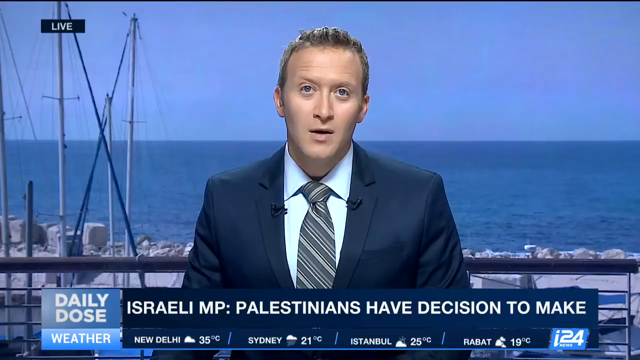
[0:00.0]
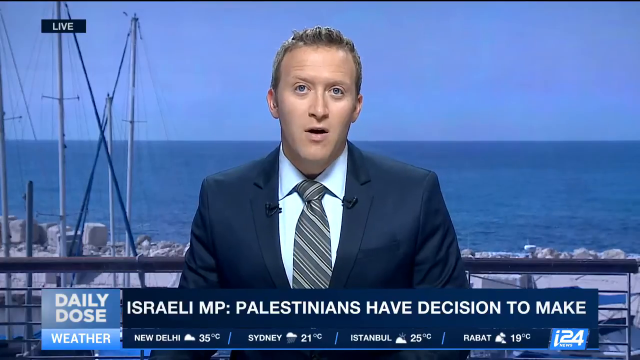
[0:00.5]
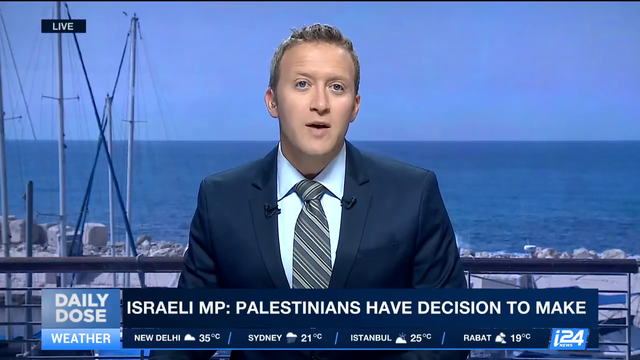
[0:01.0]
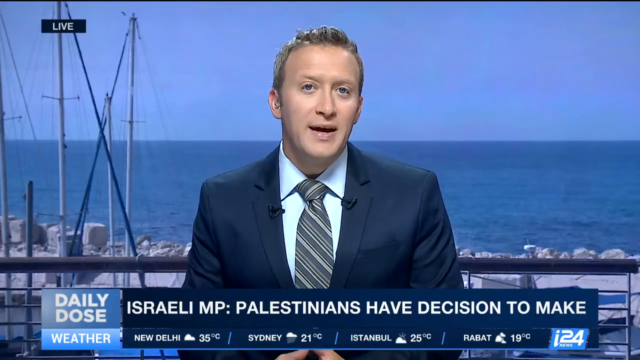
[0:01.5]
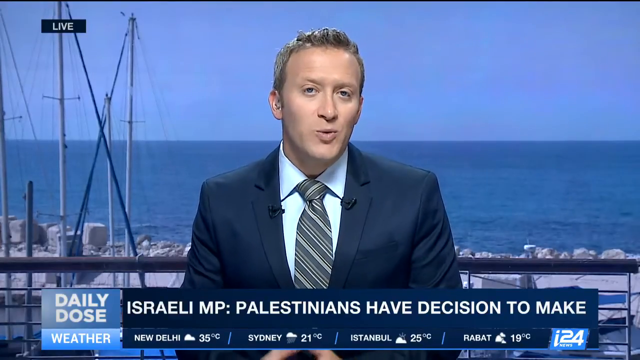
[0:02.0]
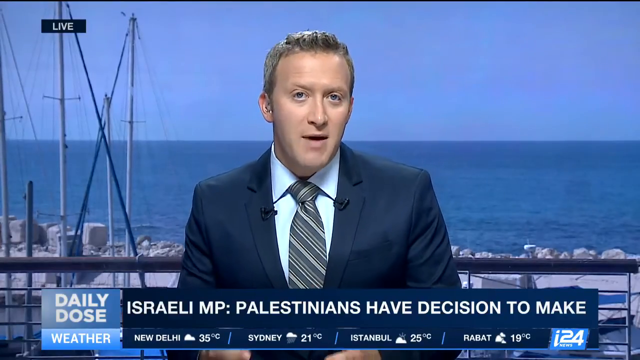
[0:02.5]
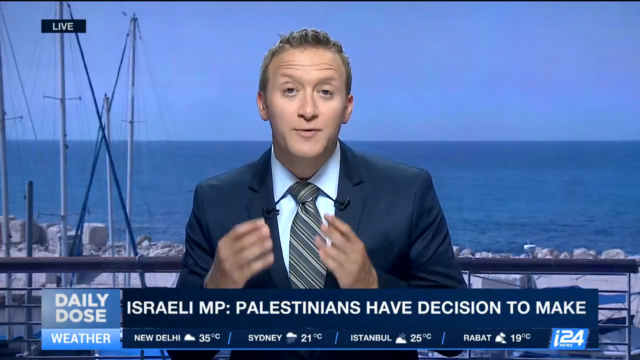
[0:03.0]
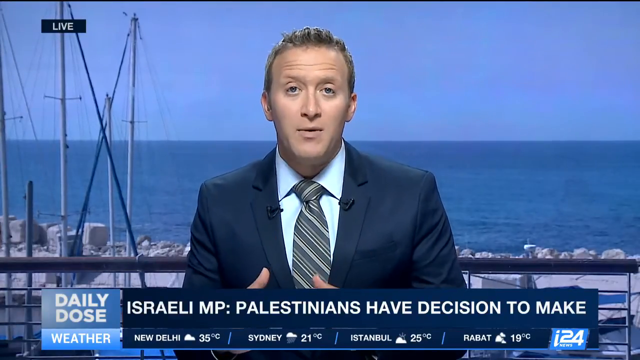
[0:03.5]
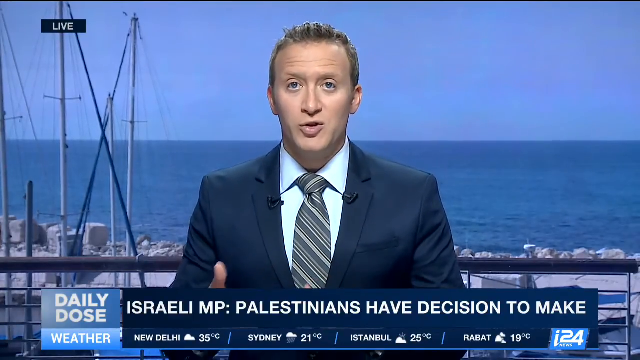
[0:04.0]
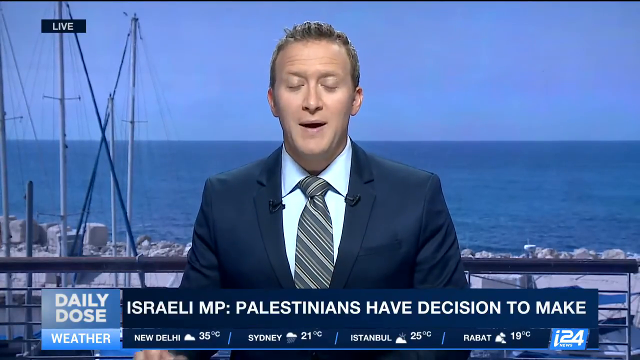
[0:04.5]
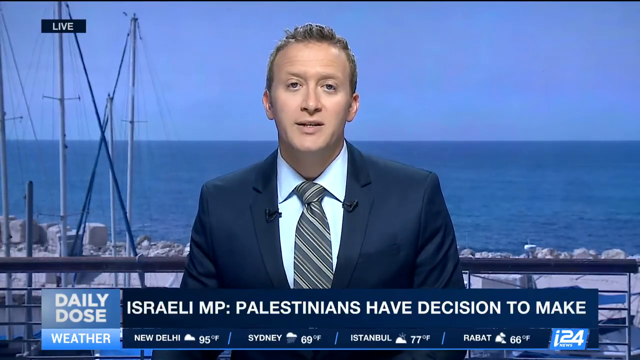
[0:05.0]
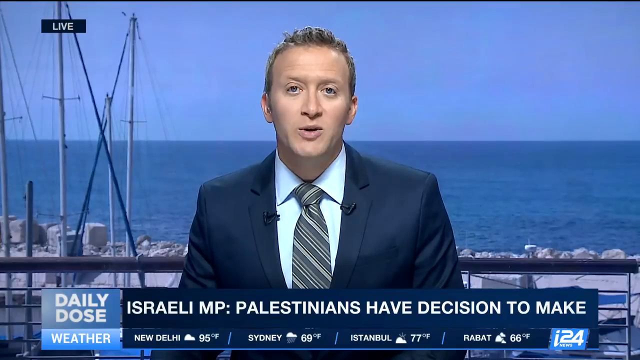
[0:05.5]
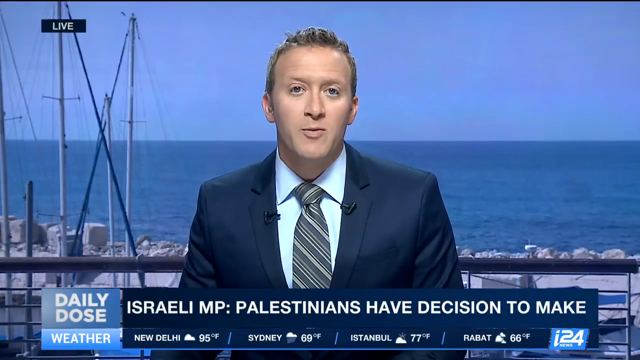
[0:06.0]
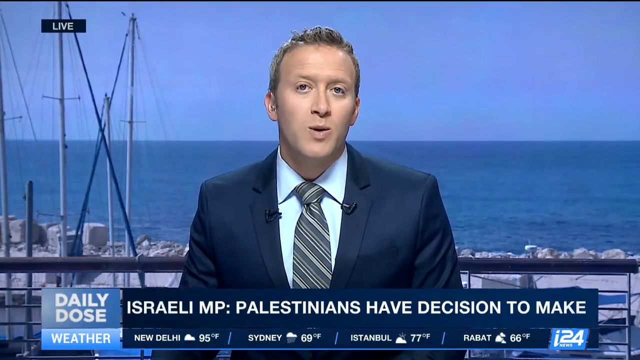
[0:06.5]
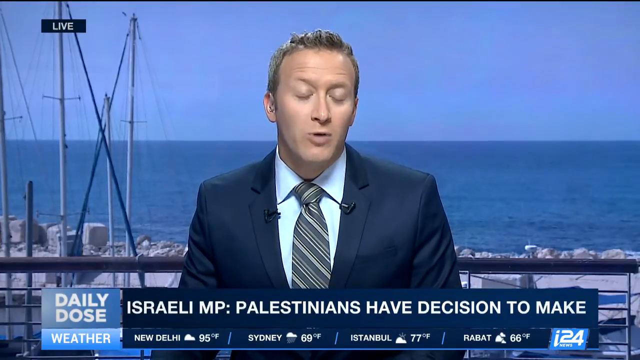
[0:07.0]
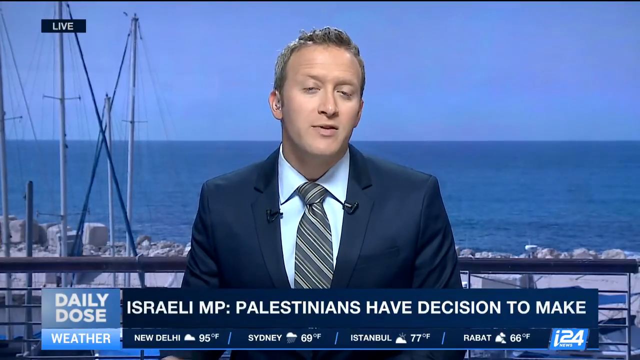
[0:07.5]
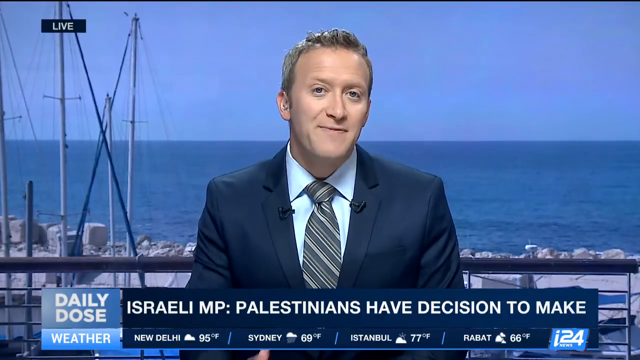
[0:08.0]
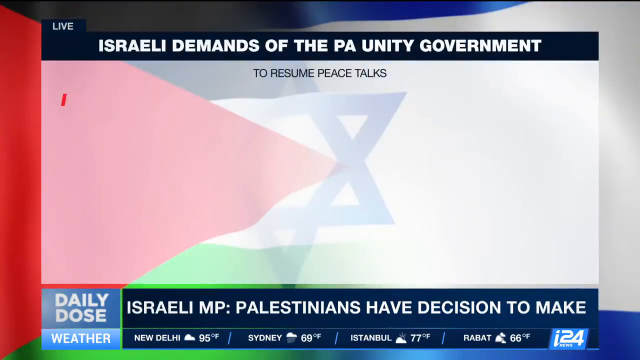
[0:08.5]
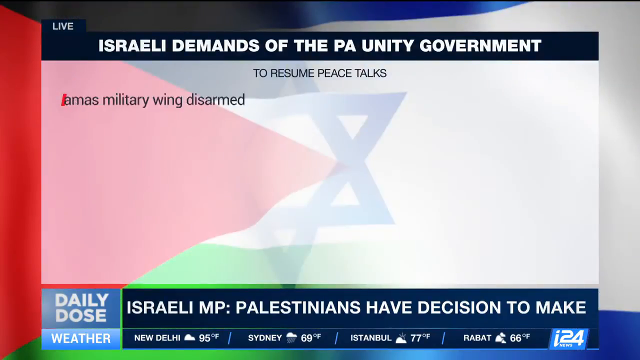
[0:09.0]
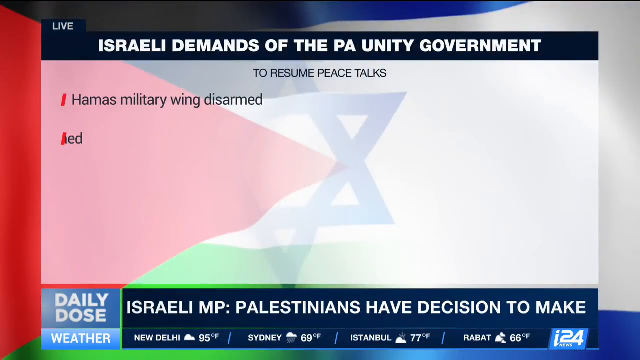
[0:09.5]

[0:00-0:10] A television news broadcast shows a white man wearing a blue suit, a sky blue shirt and a striped tie. He looks serious as he talks. Behind him are the ocean and some poles. The word "weather" is written on the screen, along with a percentage.